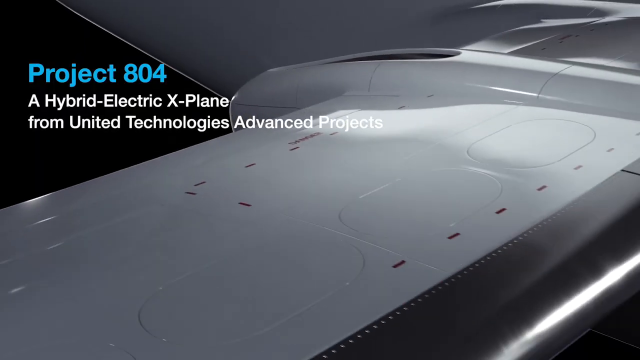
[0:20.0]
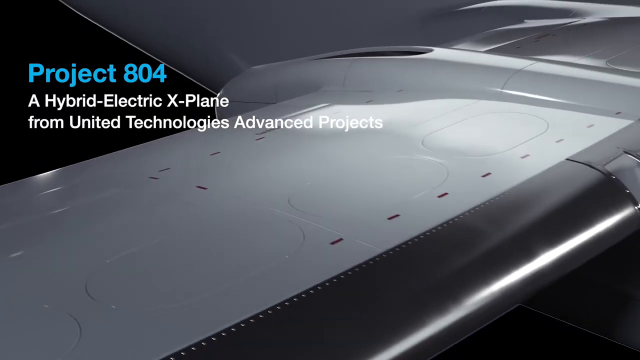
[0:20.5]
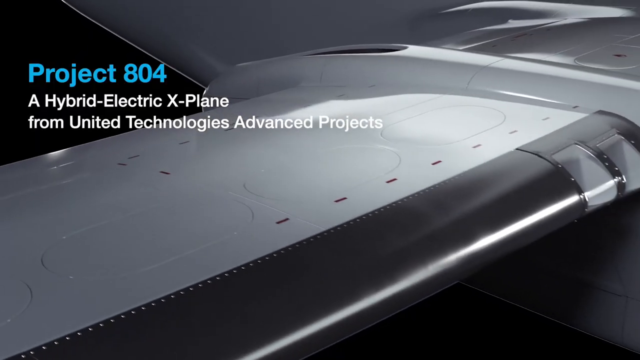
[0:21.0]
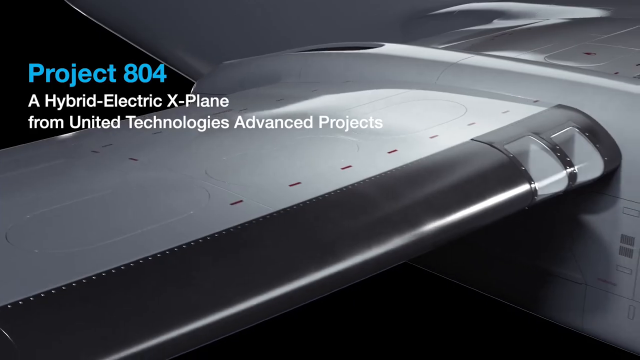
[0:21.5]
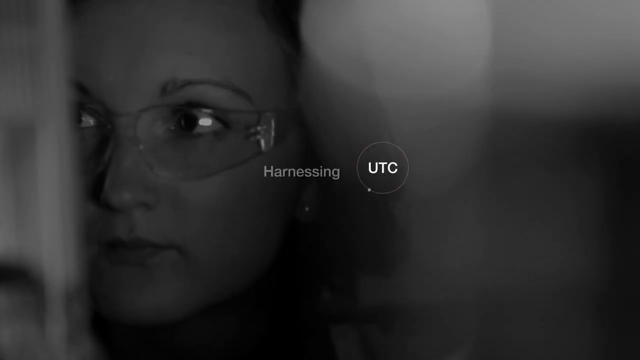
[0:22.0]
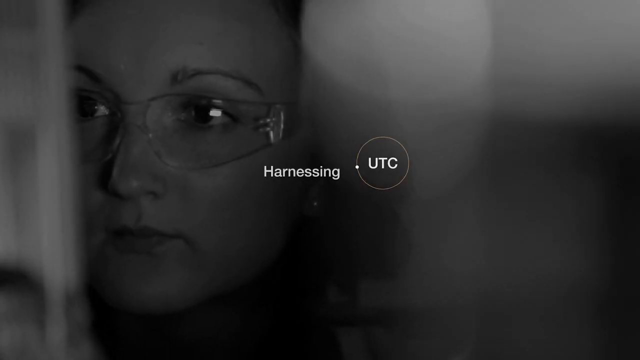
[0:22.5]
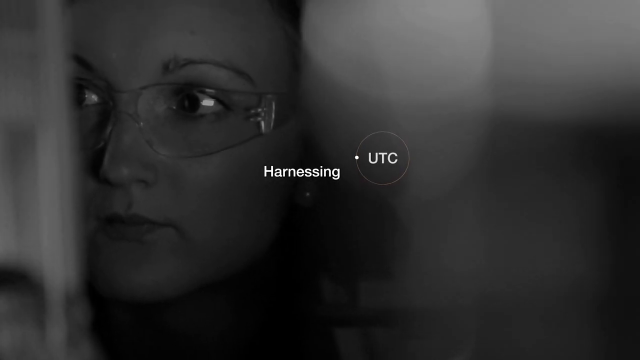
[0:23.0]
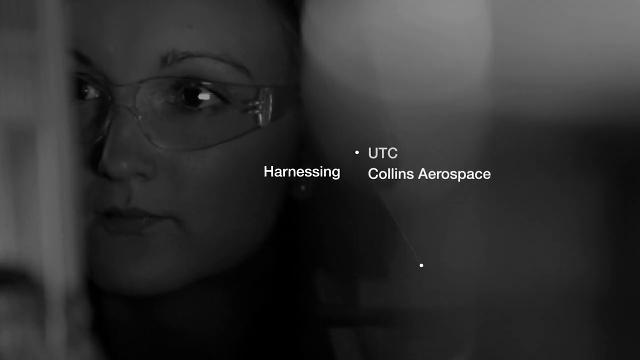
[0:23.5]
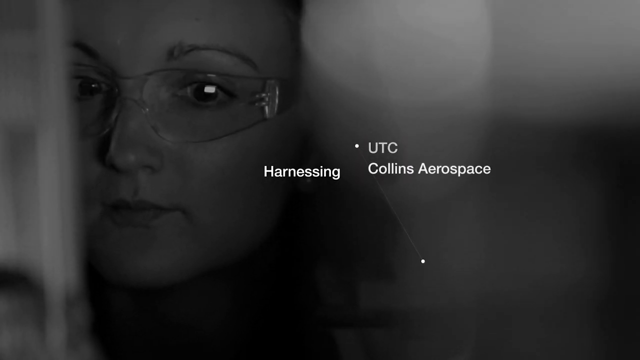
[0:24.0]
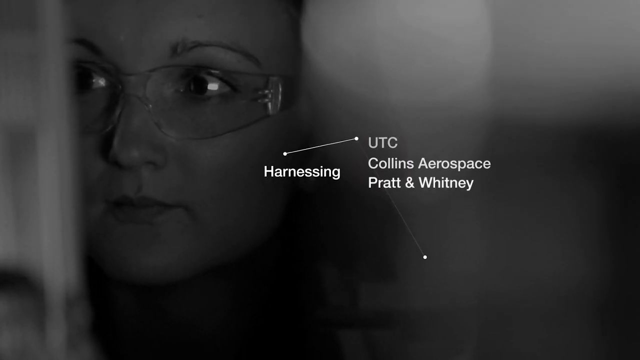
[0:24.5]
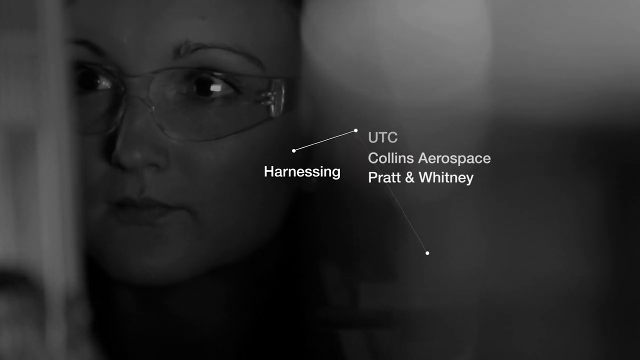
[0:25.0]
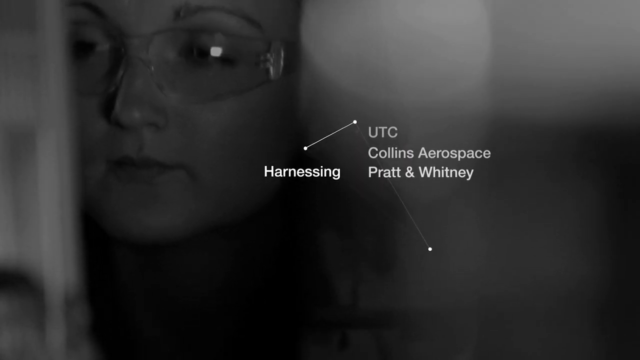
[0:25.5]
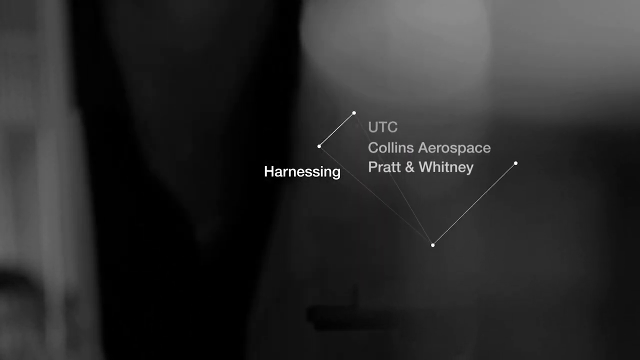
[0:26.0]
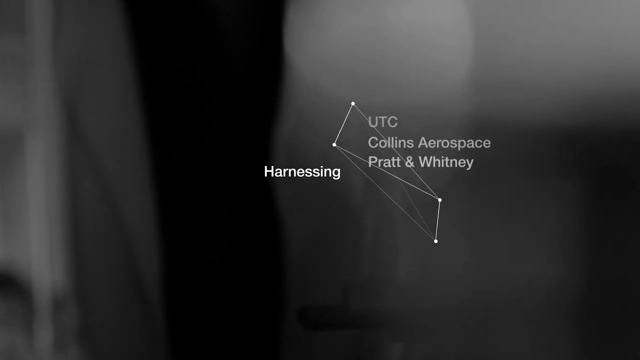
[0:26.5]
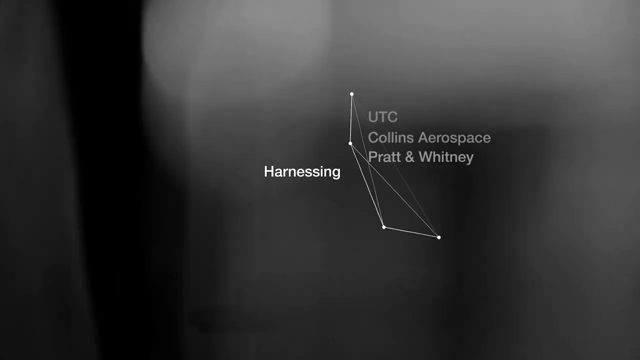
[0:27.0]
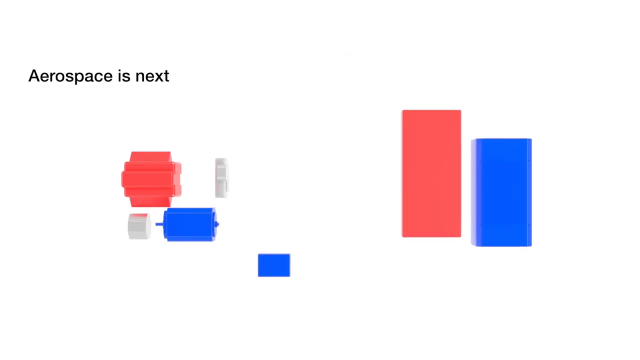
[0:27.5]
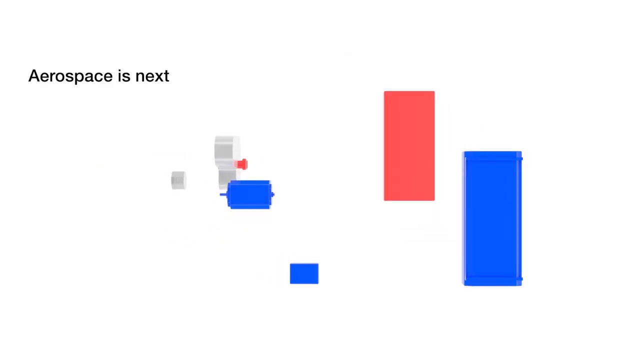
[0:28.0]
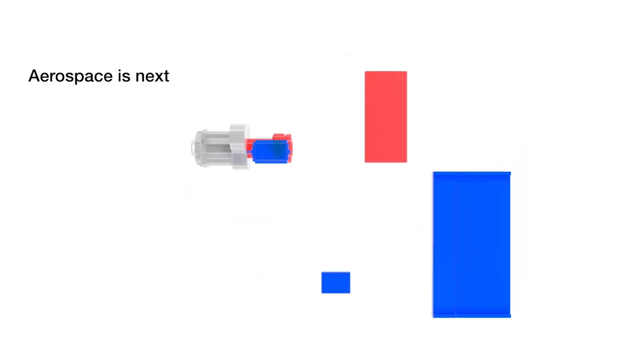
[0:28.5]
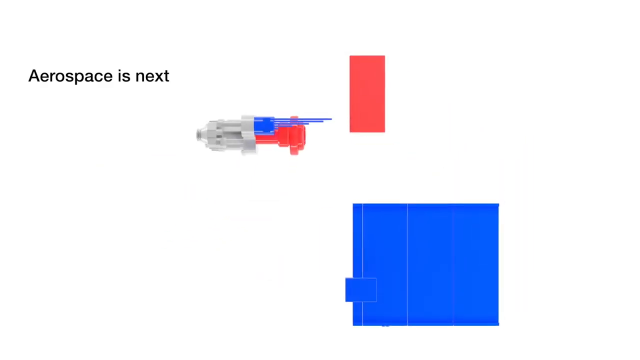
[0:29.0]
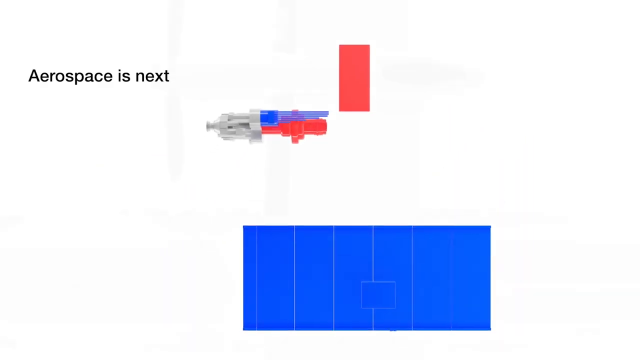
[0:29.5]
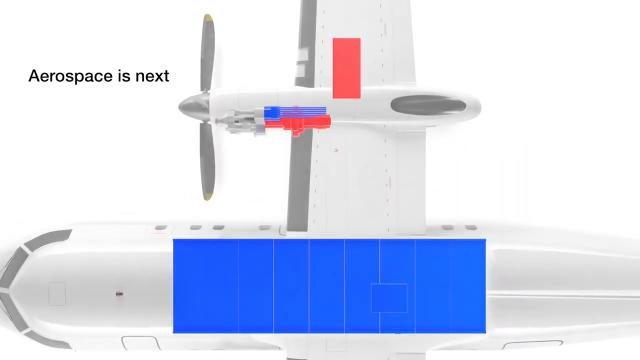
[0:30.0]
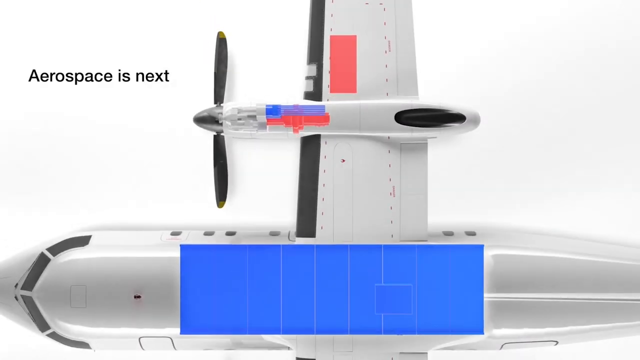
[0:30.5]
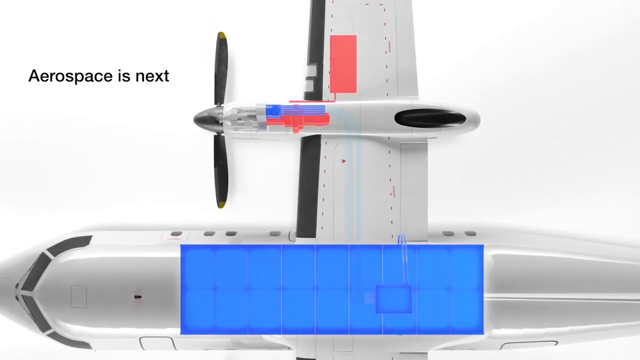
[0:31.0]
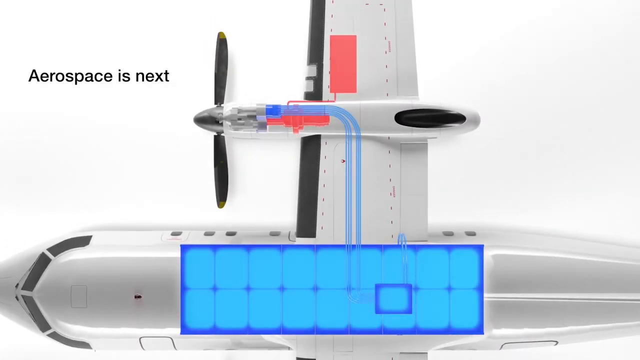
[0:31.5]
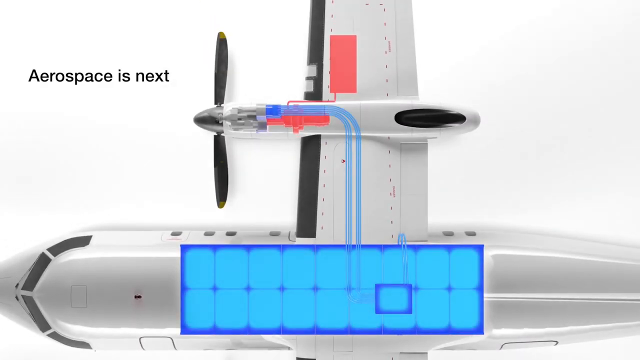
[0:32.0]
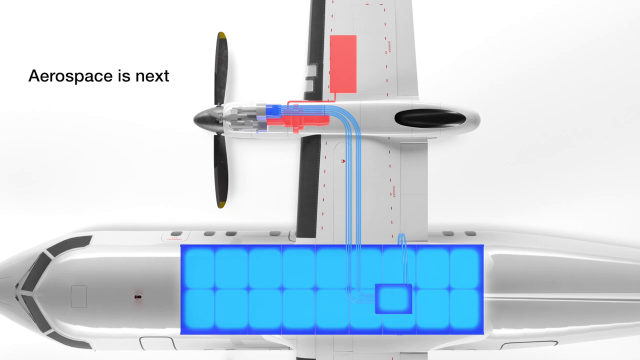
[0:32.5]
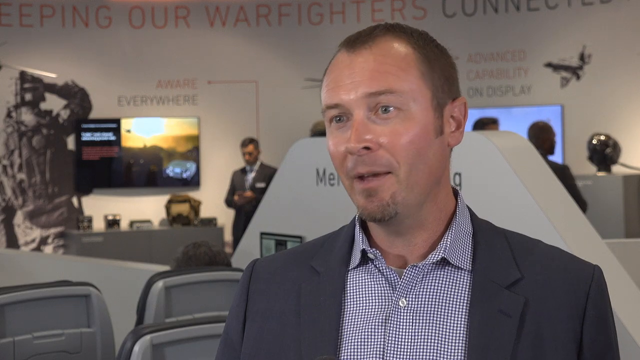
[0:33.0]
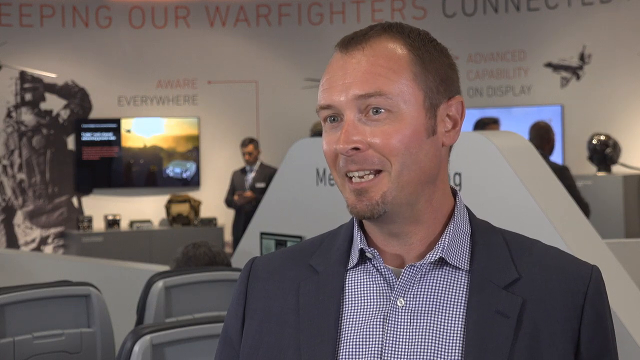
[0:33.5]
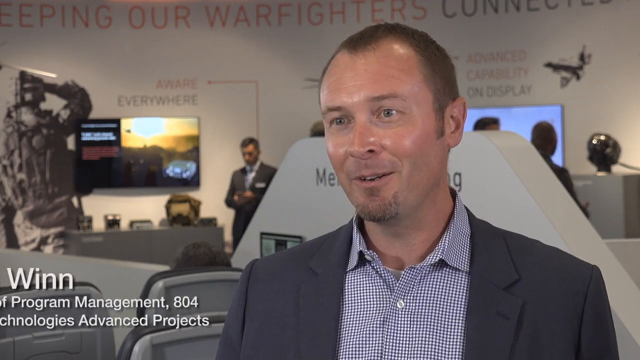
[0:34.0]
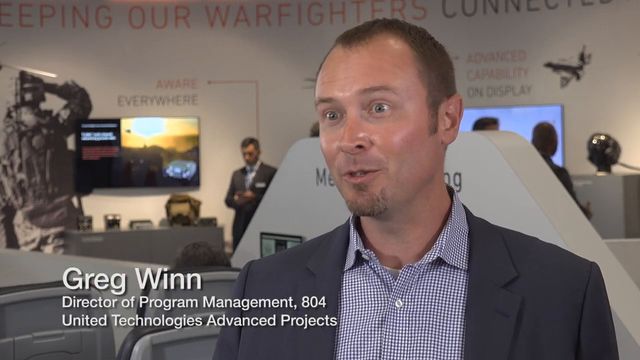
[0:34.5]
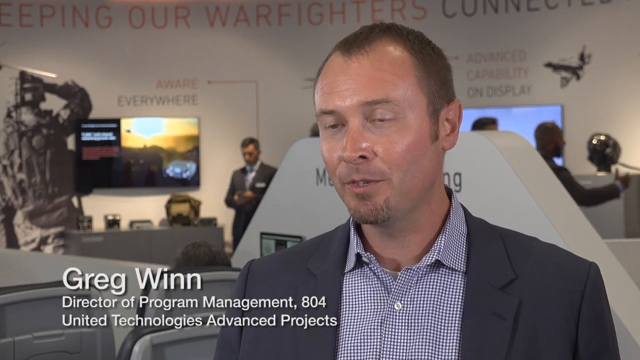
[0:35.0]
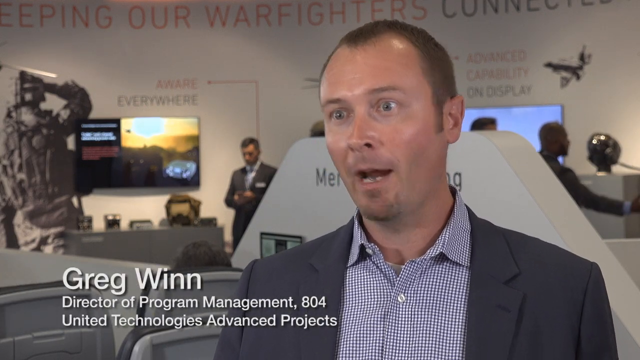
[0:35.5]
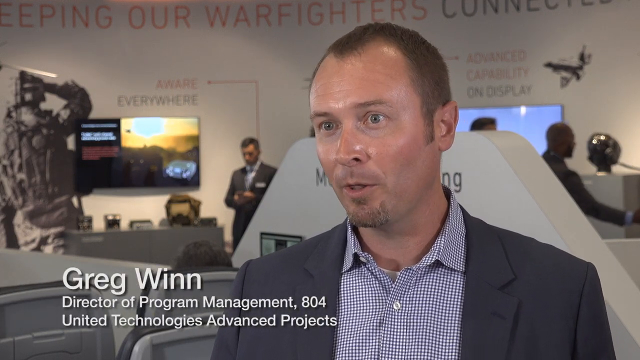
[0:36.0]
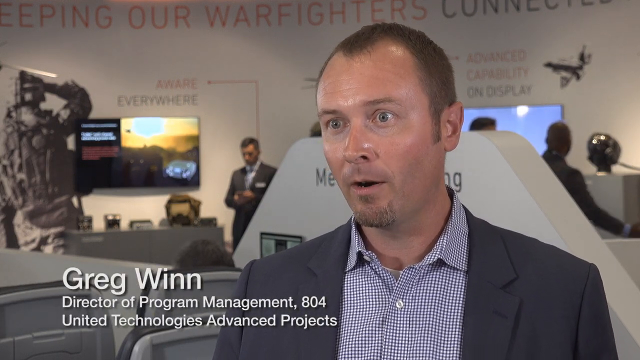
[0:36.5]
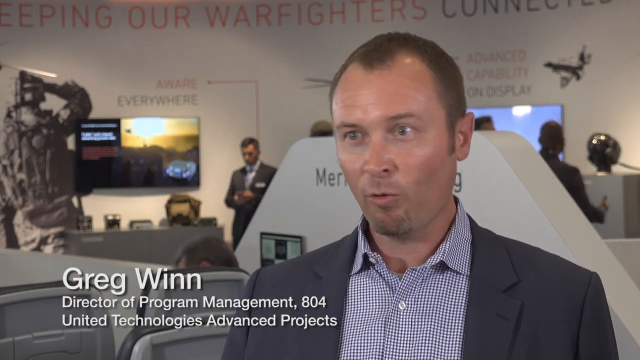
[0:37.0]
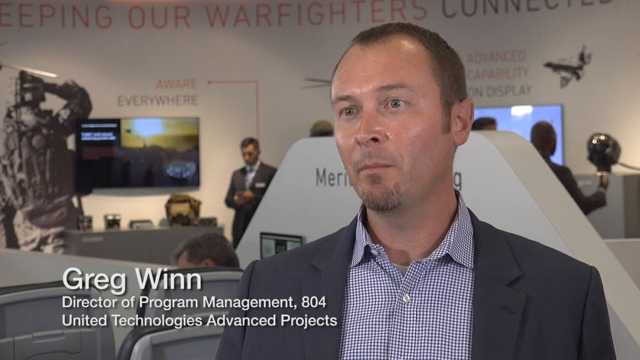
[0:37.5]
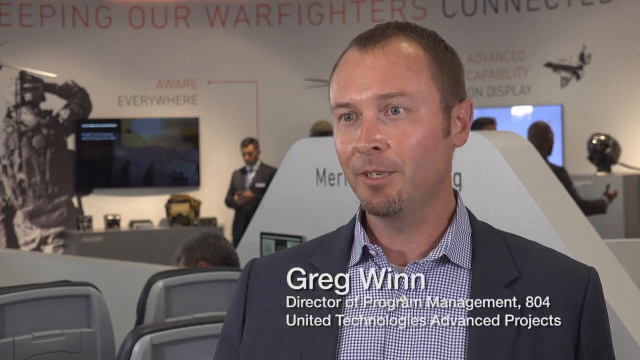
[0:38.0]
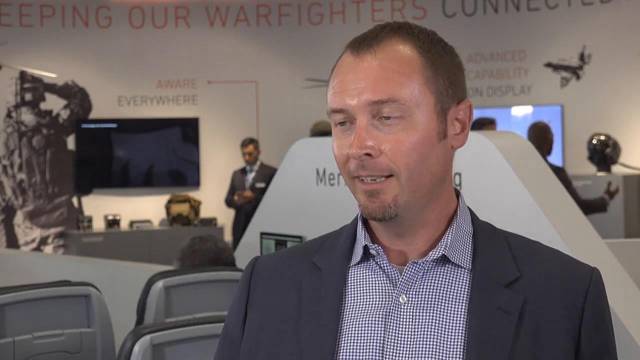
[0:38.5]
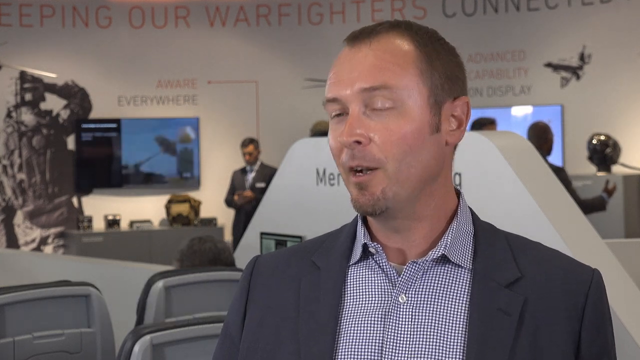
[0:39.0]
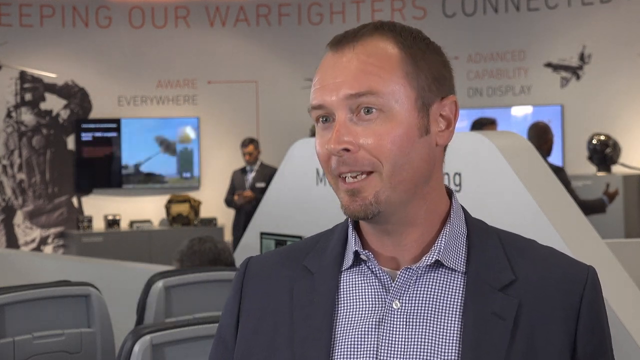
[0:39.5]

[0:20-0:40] A scene shows Project 804, a hybrid electric X-plane from United Technologies Advanced Projects, with the wing of a plane that looks like it is probably made of plastic, with some kind of wraparound stitch on the front half. The wing is shown up close, and then the camera zooms in on the face of a woman wearing safety glasses; she appears to be designing something on a computer. Beside her face, text reads "Harnessing UTC Collins Aerospace." She is shown looking around. Electric motors on the side of airplanes are shown, along with a diagram of where the power comes from. Another man appears, identified as Greg Nguyen, Director of Program Management for 804, United Technologies Advanced Projects; he is animated and smiling in the interview and seems very excited about the project.